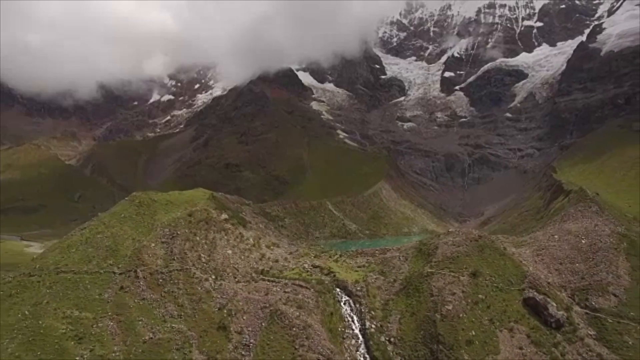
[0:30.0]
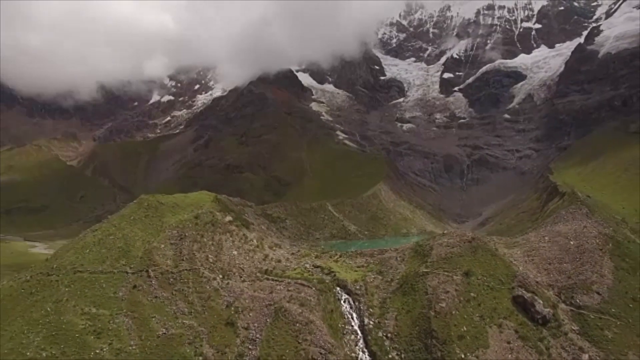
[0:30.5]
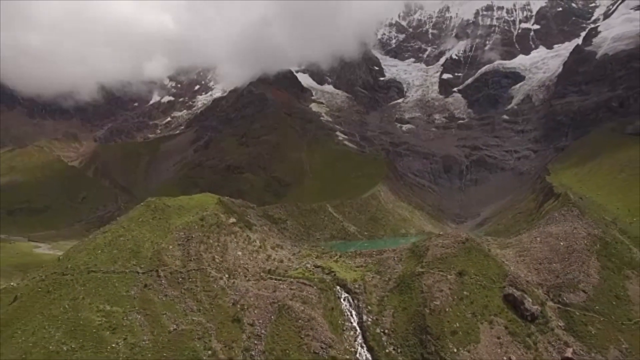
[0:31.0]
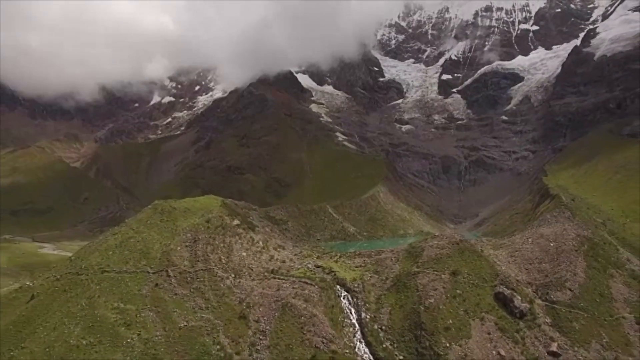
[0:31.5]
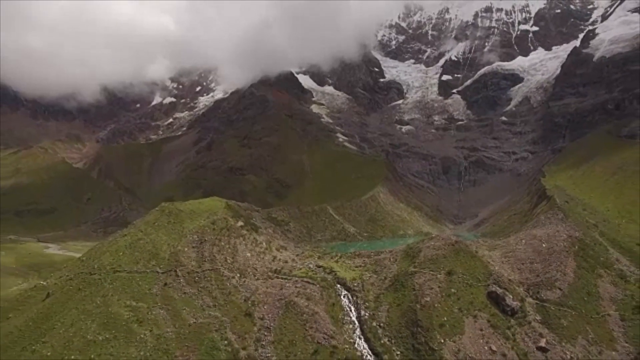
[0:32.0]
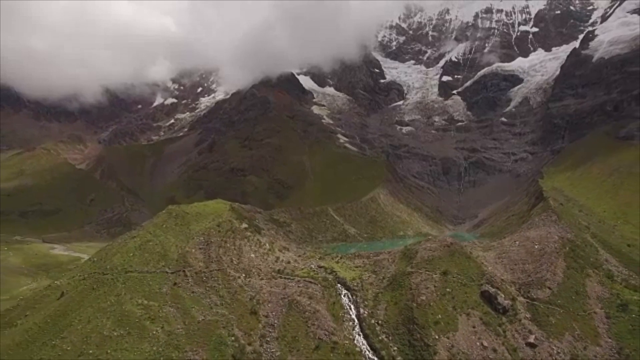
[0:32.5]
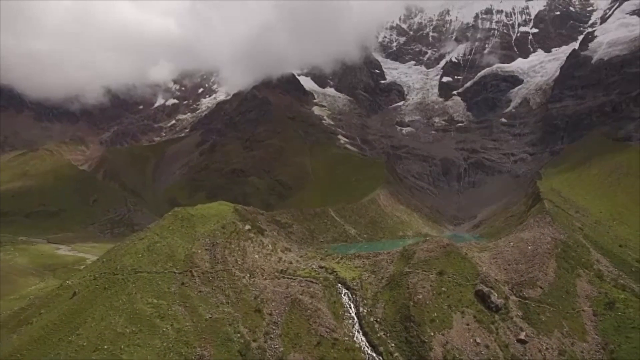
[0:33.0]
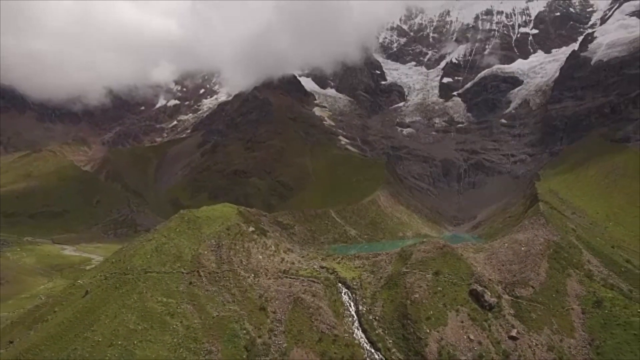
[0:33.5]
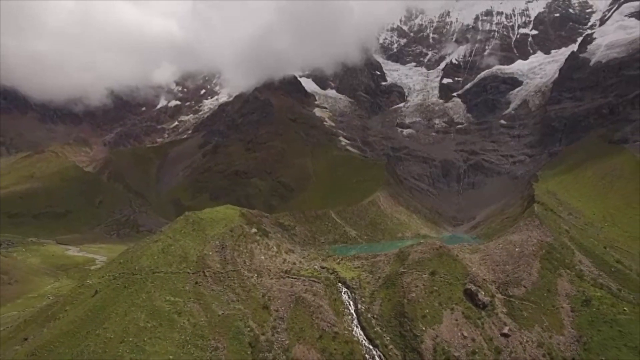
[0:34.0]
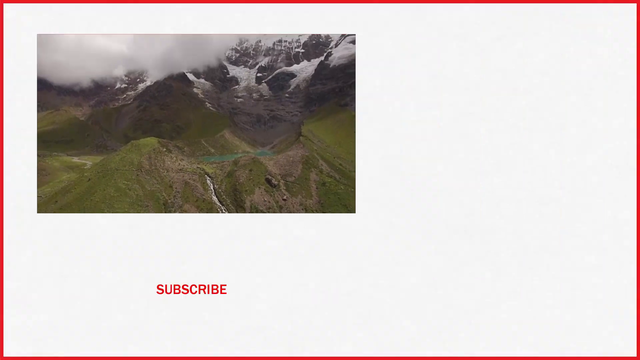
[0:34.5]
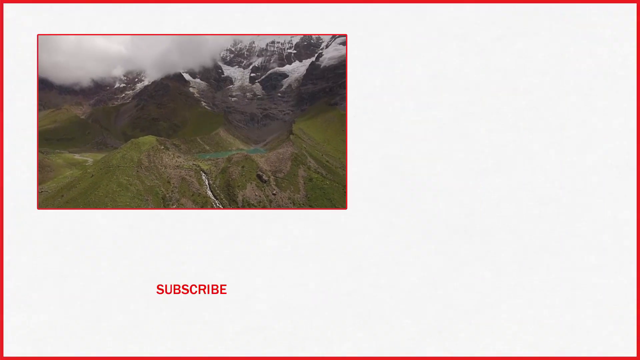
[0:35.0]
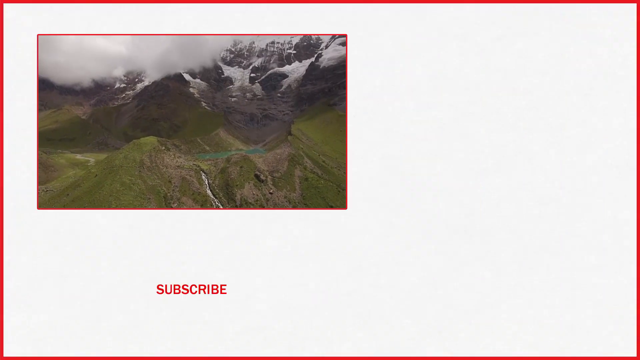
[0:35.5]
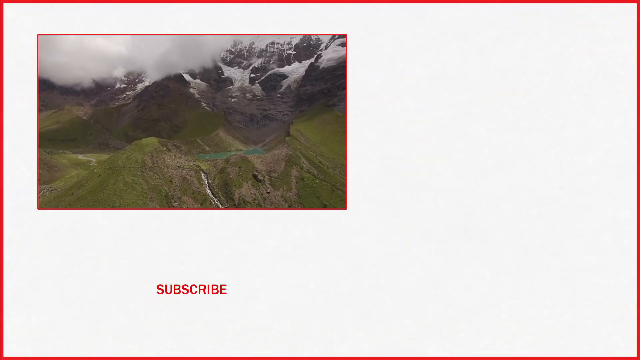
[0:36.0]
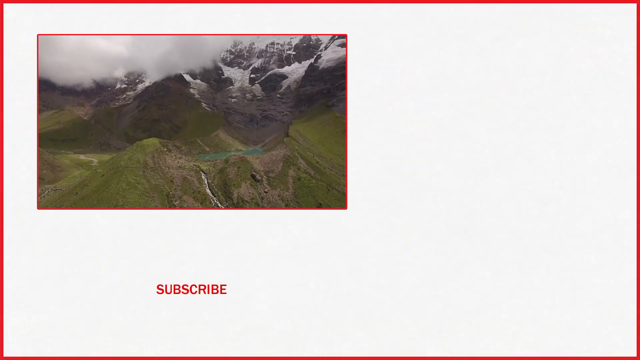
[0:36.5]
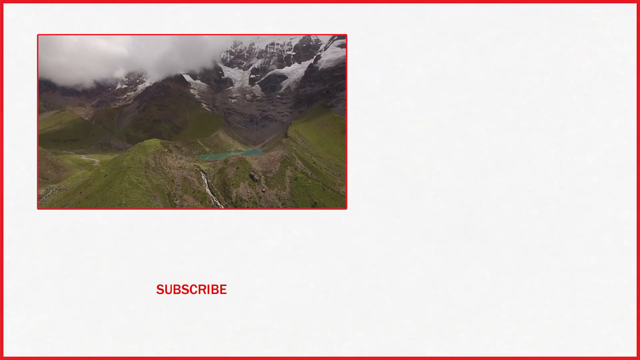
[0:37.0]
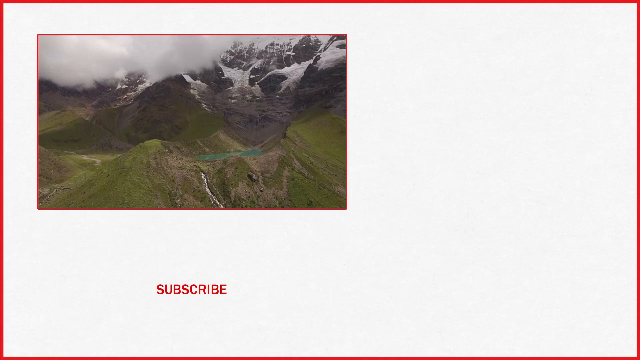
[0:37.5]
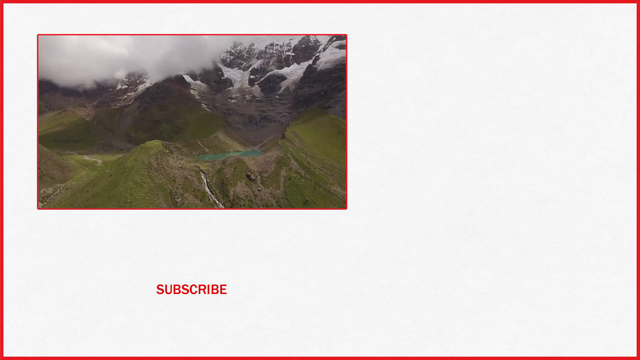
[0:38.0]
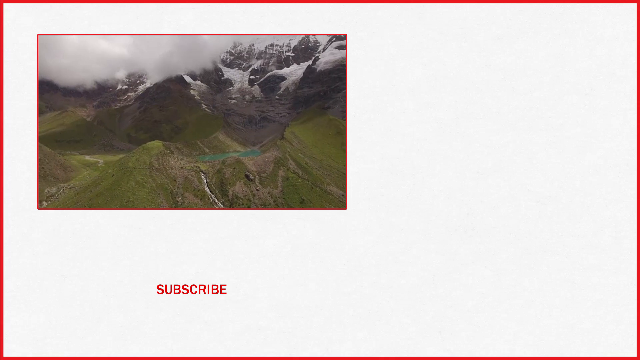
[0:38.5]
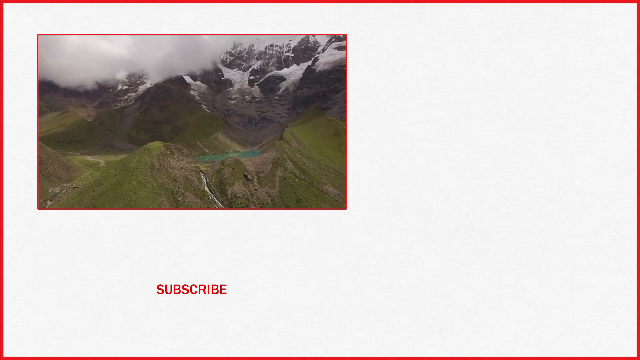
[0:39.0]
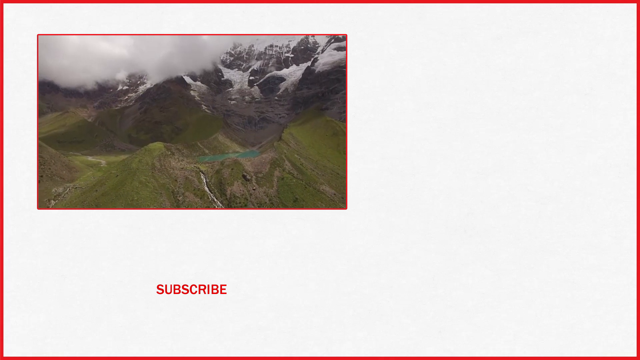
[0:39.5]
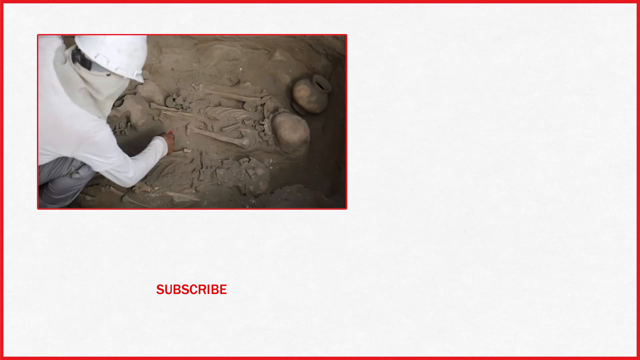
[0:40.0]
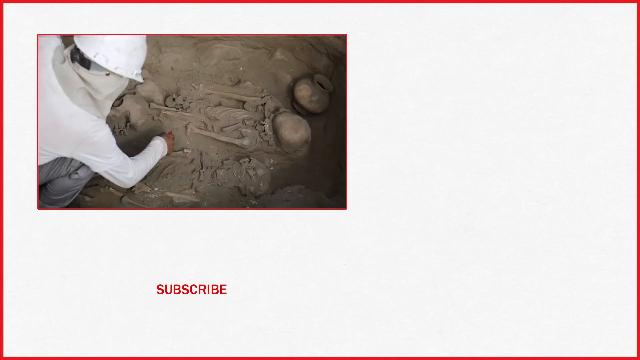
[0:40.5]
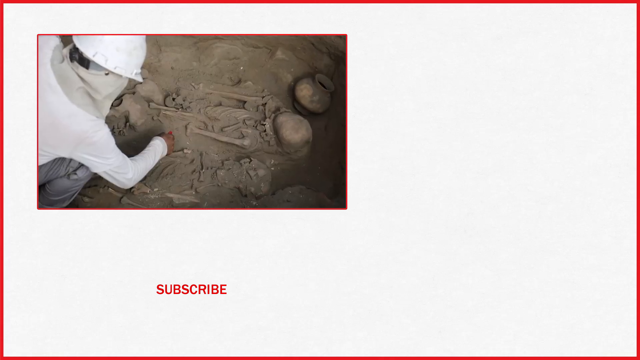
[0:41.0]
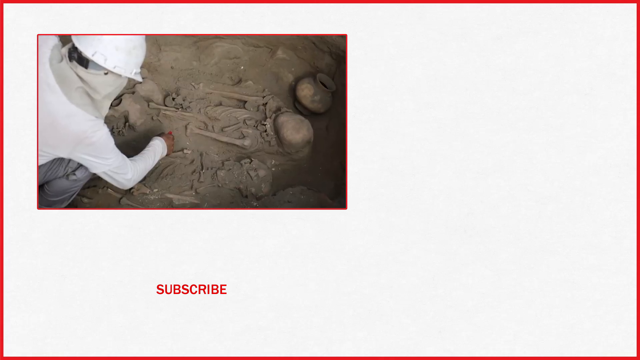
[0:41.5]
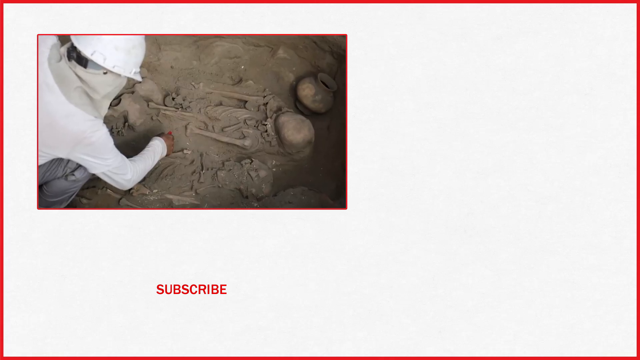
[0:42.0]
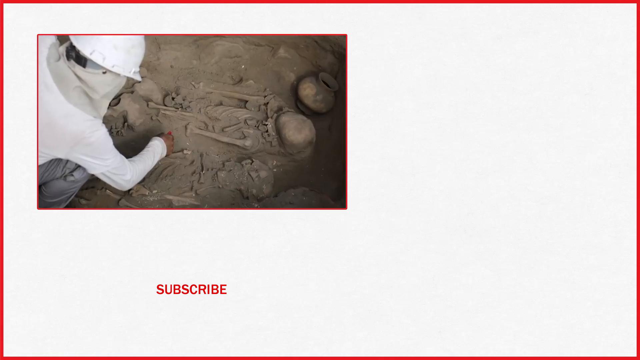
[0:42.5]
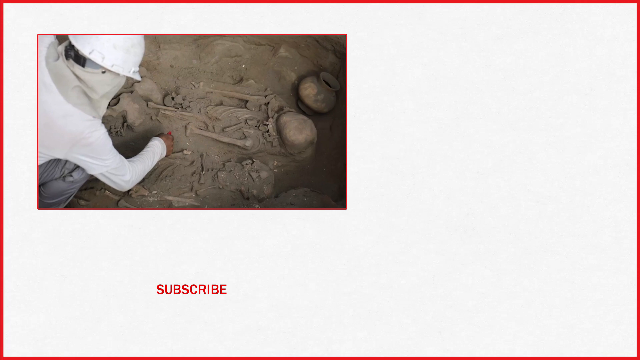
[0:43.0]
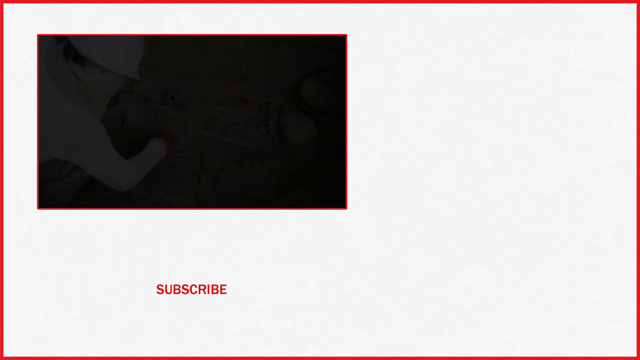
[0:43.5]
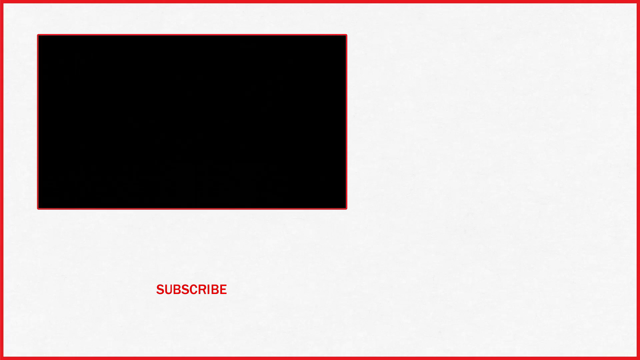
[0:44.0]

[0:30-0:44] The mountain view looks like drone footage, slowly moving back. There appears to be snow in the top right-hand corner, while the bottom of the mountainside is filled with grass. A large plume, a cotton-looking cloud, is in the top left. The image then zooms into a small square box in the top left, which shows the image of the man excavating the skeleton, with "subscribe" in red letters under it. There is a red border around this rectangle in the top left that shows these images, and the rest of the screen is white. Then the video ends.